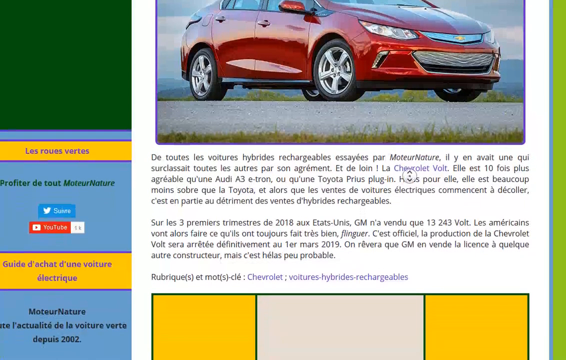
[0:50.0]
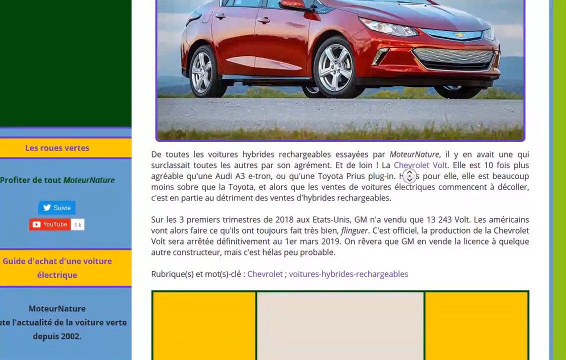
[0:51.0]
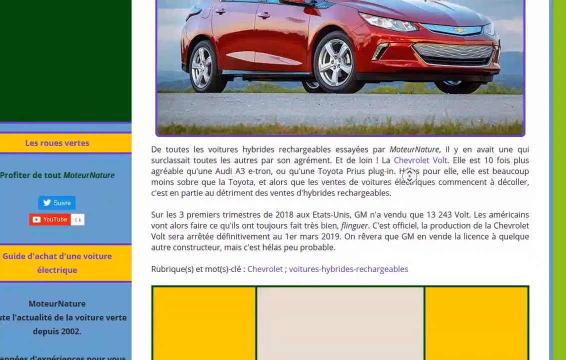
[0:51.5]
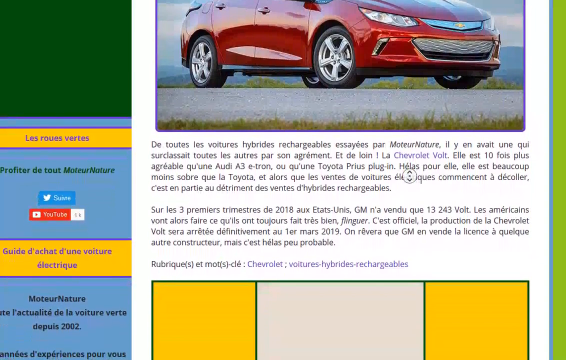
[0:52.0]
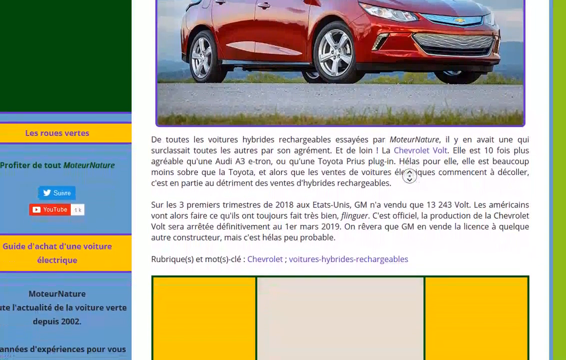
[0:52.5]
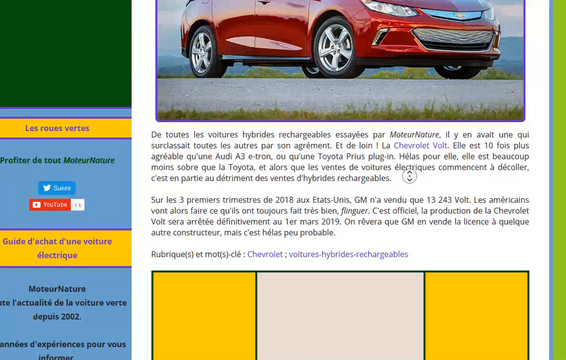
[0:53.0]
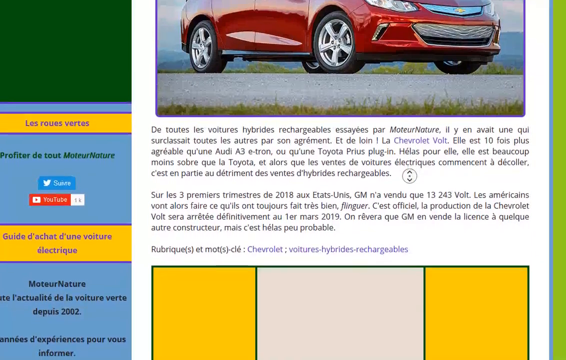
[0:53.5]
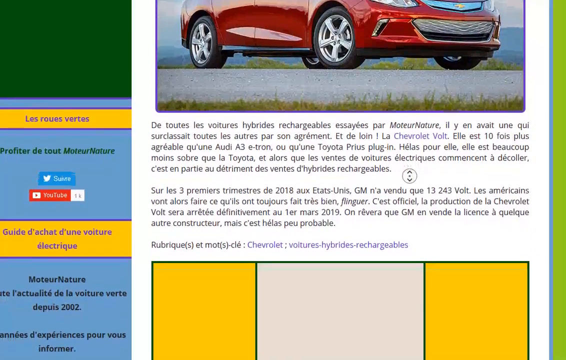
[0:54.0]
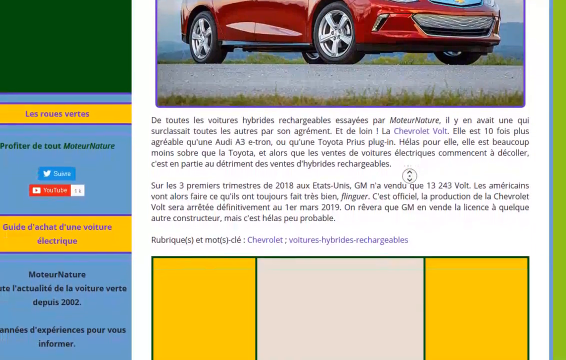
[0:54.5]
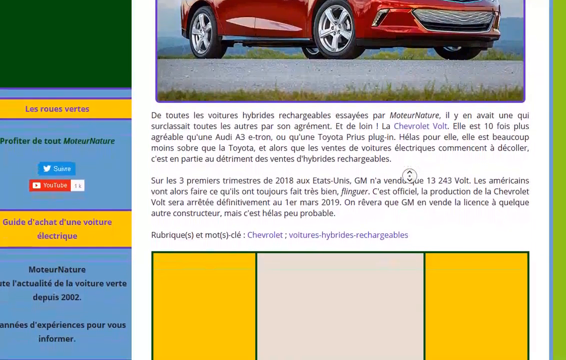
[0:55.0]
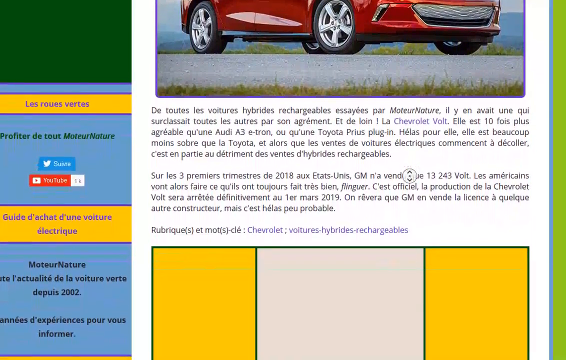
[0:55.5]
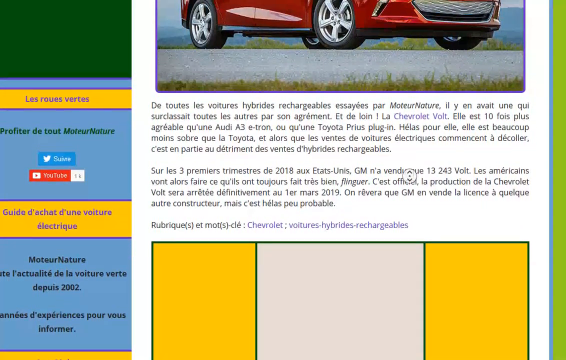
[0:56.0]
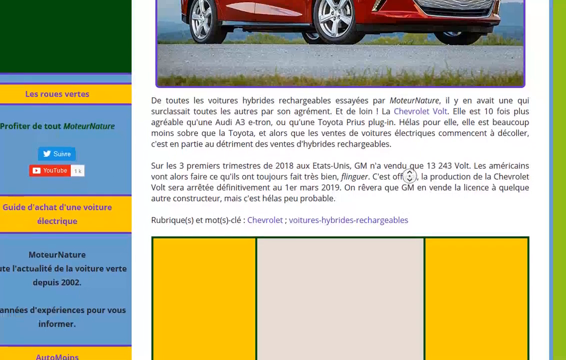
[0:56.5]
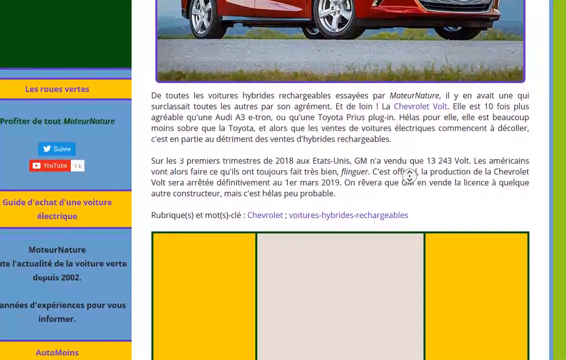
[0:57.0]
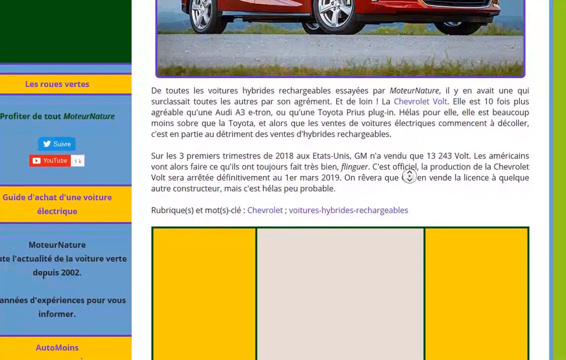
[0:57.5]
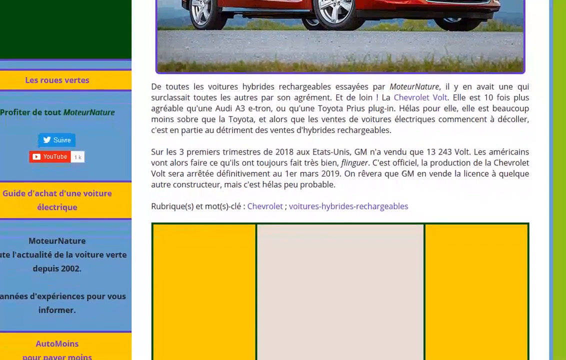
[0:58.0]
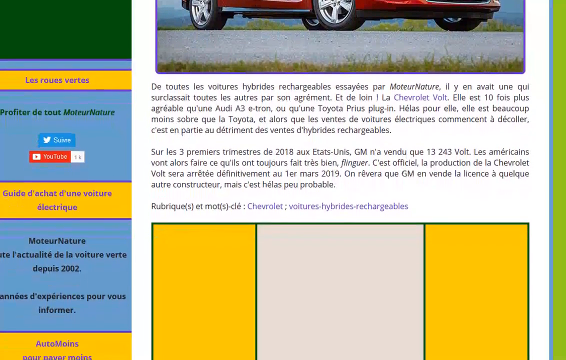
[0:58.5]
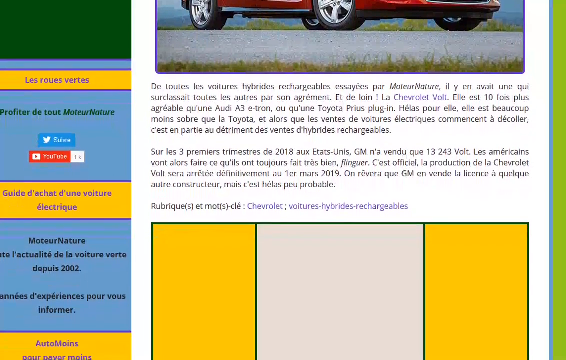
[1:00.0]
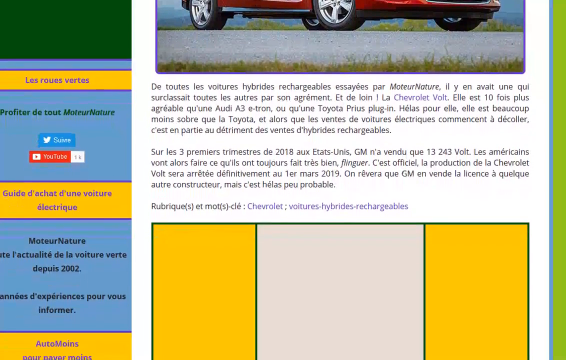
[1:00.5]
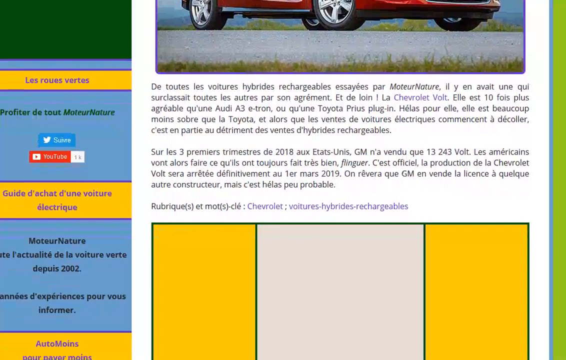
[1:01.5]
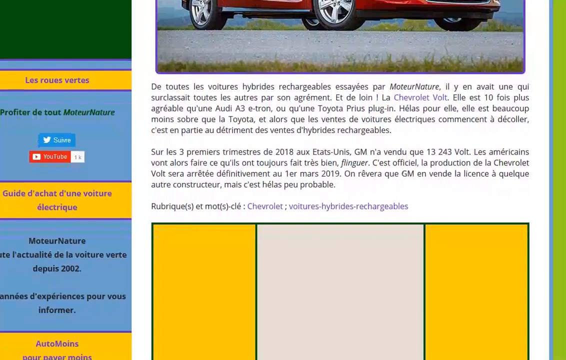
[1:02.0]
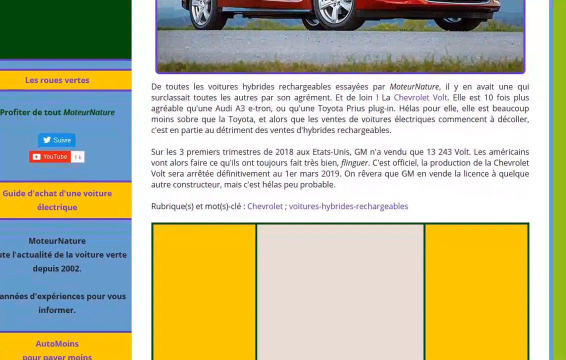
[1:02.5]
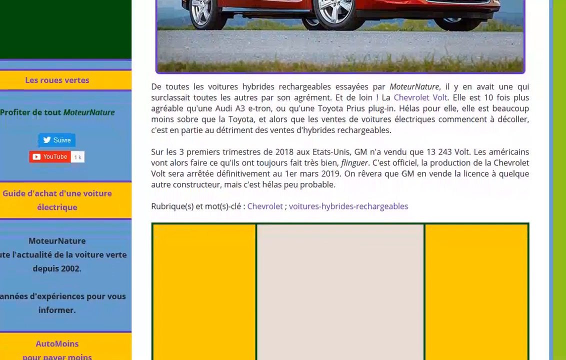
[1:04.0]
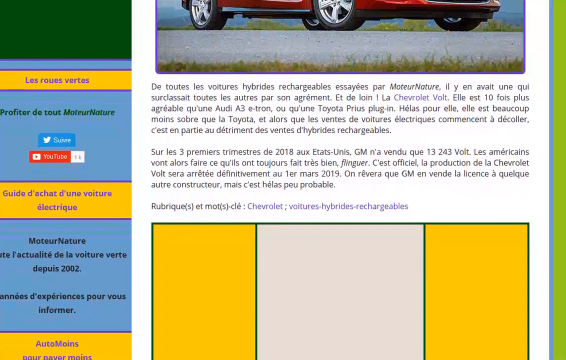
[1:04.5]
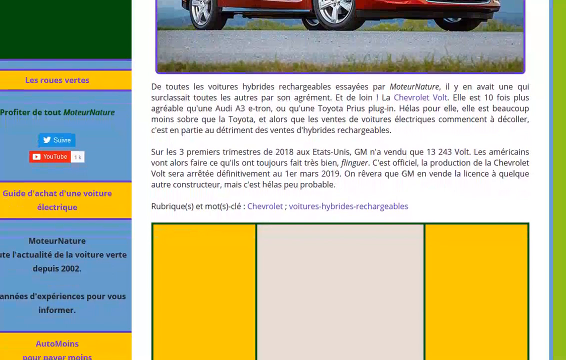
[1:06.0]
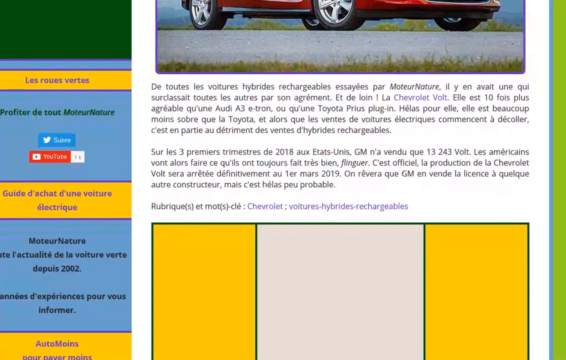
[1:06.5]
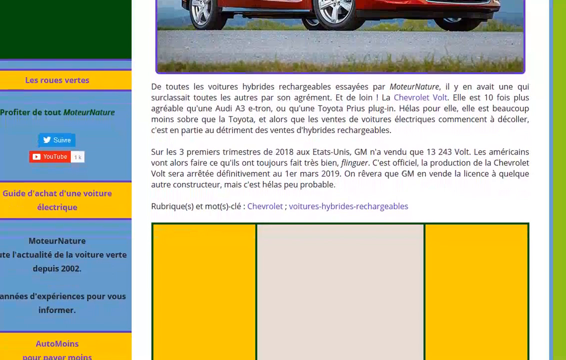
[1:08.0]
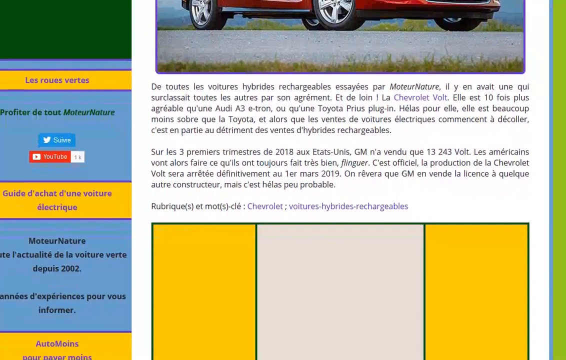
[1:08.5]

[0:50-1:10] The person scrolls downward, and the picture of the car disappears as the page moves upward. The description, about two paragraphs long and in a foreign language, is visible. At the bottom there is a rectangle of three colors: the left and right sides are yellow and the middle is white, and they appear to be sectioned off by vertical lines. The person stops scrolling on this area of the page, which no longer shows the car, only the two paragraphs of description in the center of the page and the yellow and white rectangle at the bottom. To the left there are other various descriptions, also in a foreign language.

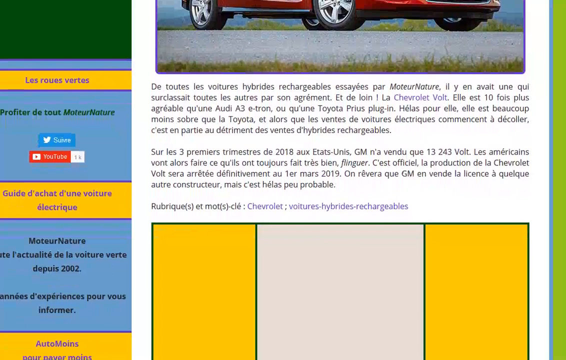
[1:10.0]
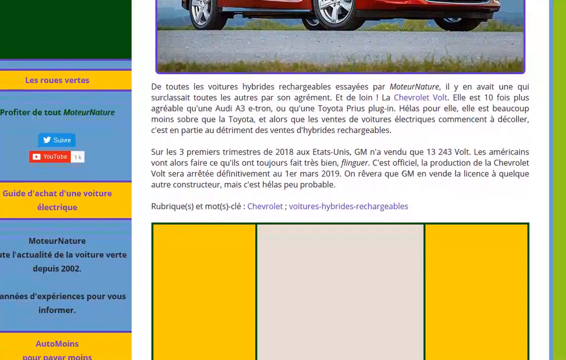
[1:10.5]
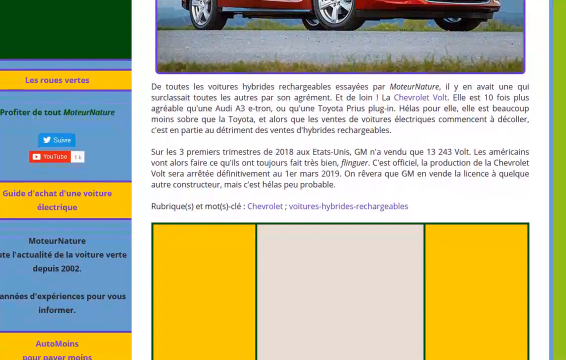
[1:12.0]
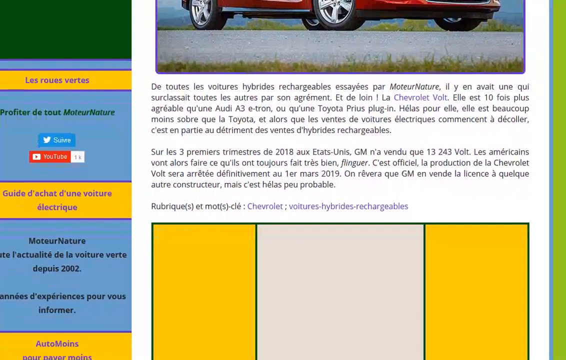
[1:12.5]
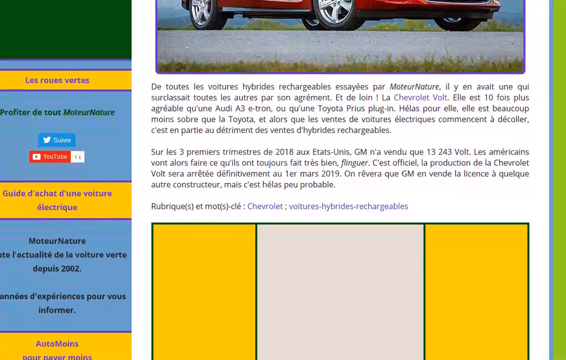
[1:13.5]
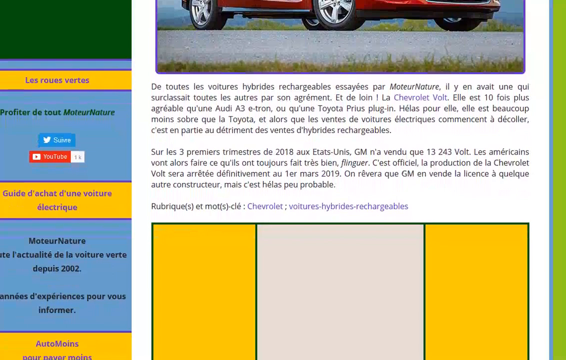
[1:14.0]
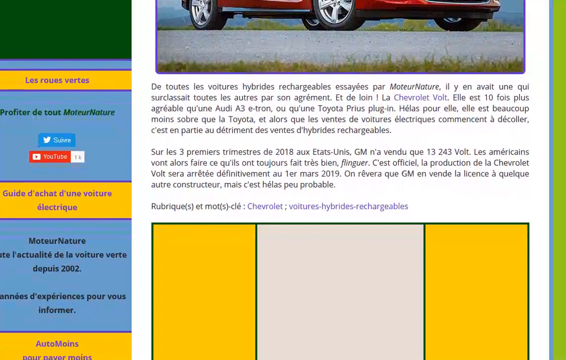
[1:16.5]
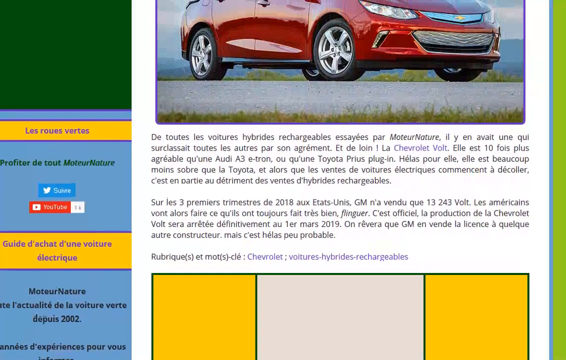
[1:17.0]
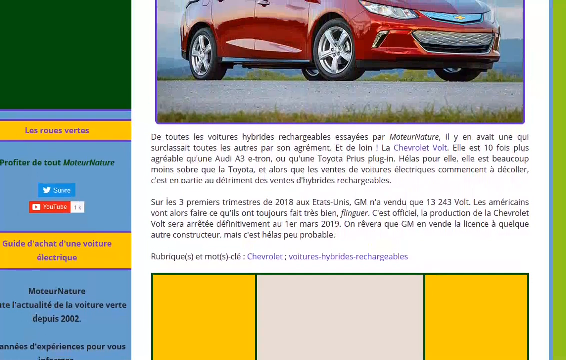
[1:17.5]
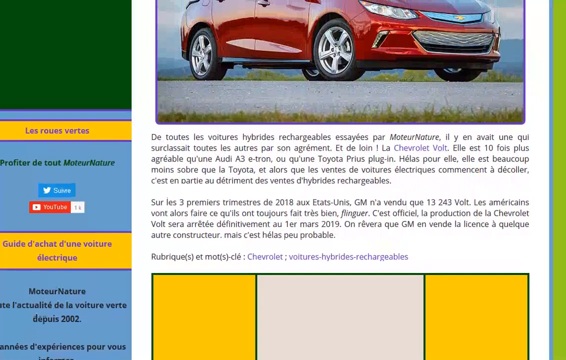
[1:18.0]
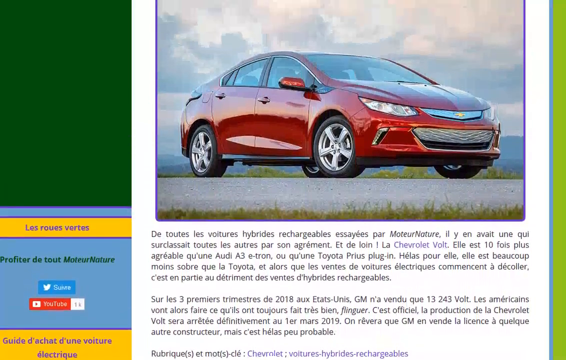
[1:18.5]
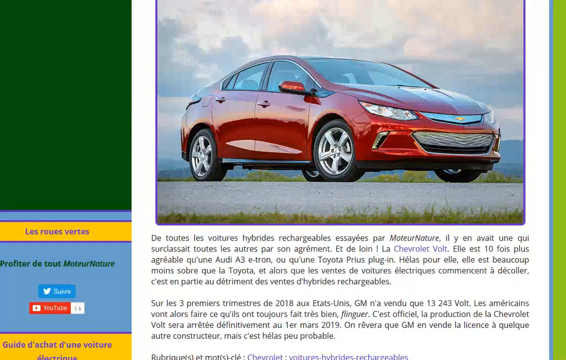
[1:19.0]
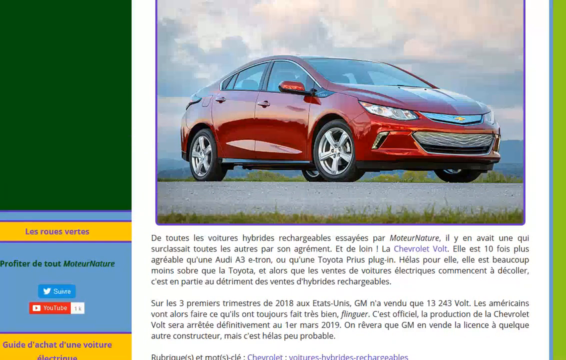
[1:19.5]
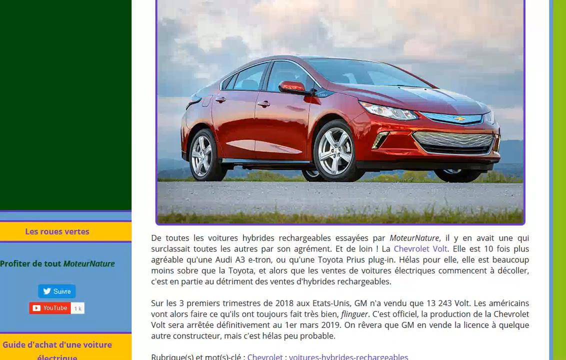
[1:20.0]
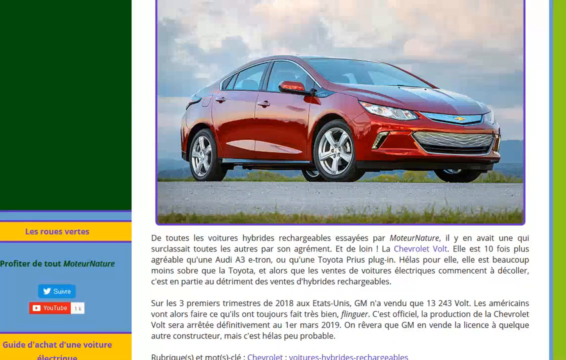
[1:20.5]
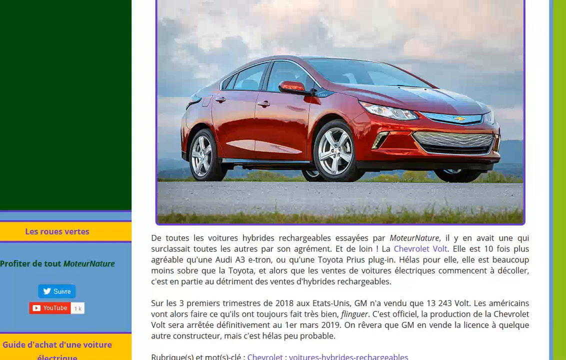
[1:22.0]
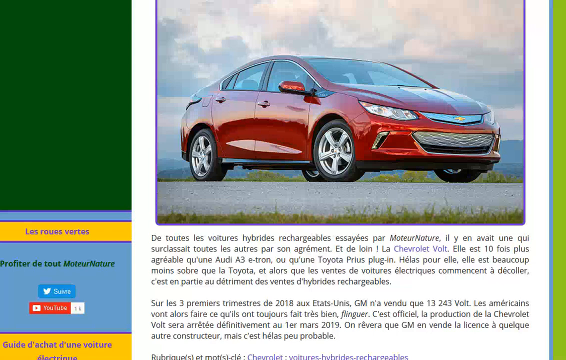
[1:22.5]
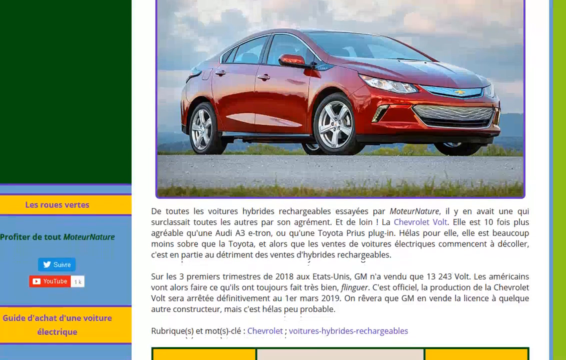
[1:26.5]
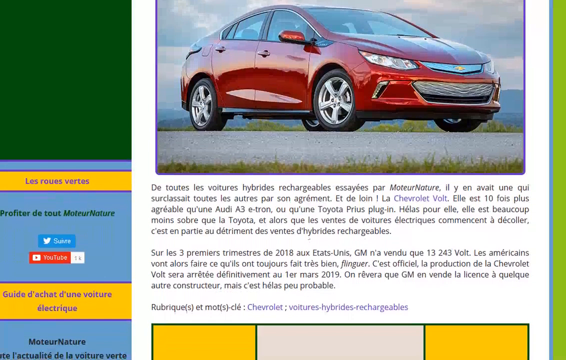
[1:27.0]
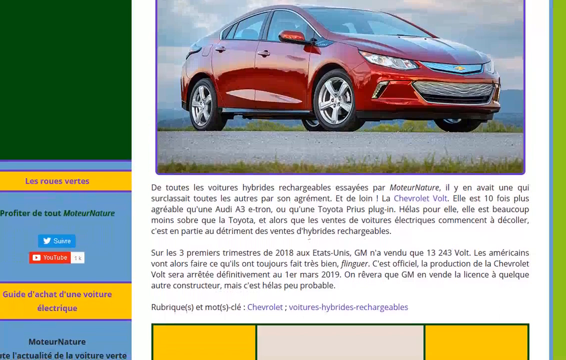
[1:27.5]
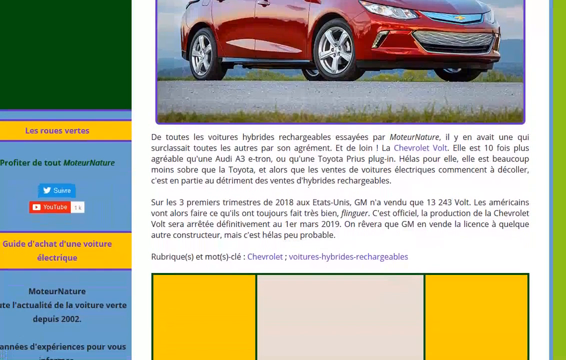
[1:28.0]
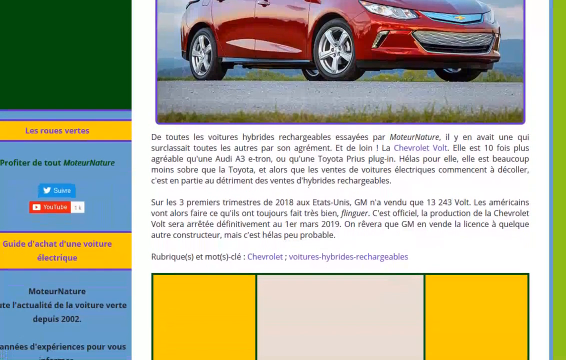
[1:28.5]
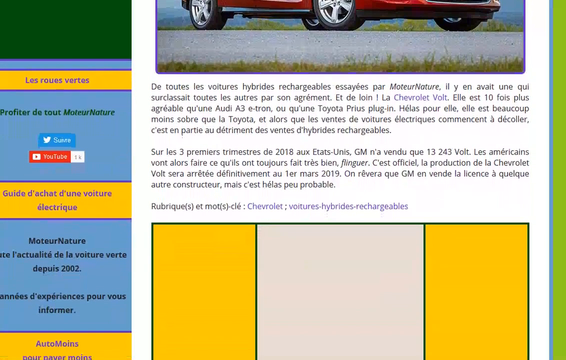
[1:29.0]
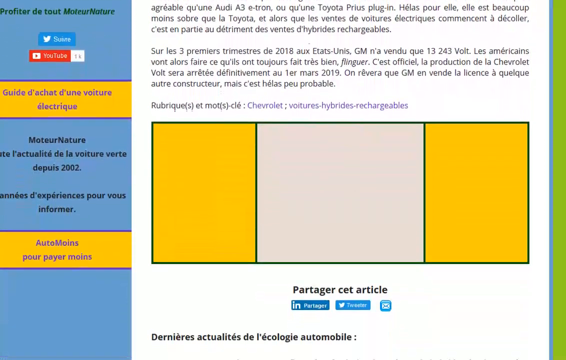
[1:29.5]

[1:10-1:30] After a pause, the person scrolls up to show the full image of the car, which is on the right side. The view then scrolls all the way down to show the full yellow and white rectangle. It almost looks like something, but it is not a flag, and it is unclear what the rectangle pertains to. Underneath the rectangle are a LinkedIn link, a Twitter link and what looks like an email link. The page looks very basic, old and outdated. On the left side, the year 2002 is visible. The page has a blue background on the left, and on the right a very thin lime green background that is barely visible.